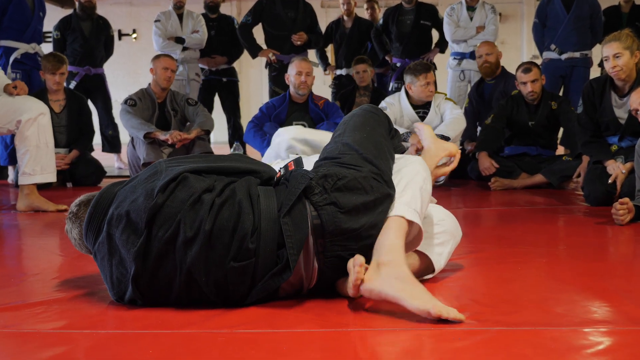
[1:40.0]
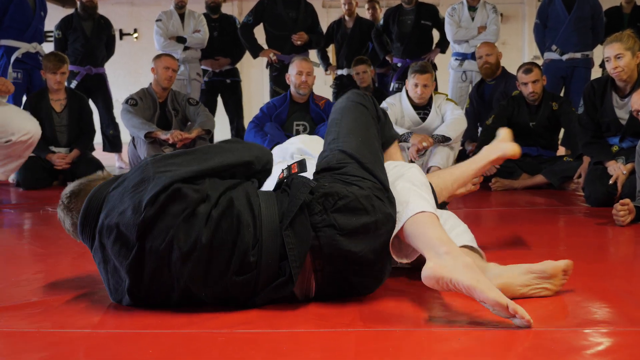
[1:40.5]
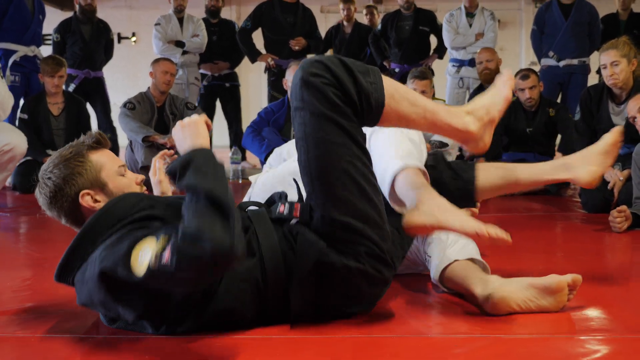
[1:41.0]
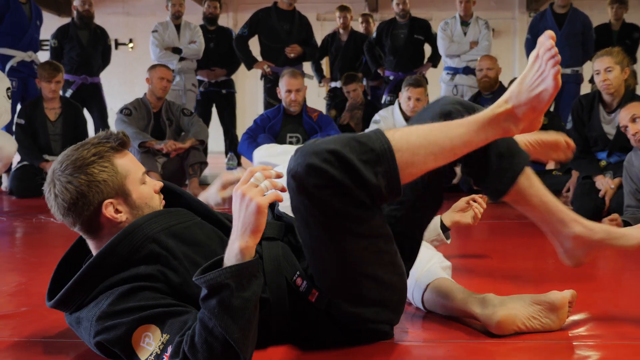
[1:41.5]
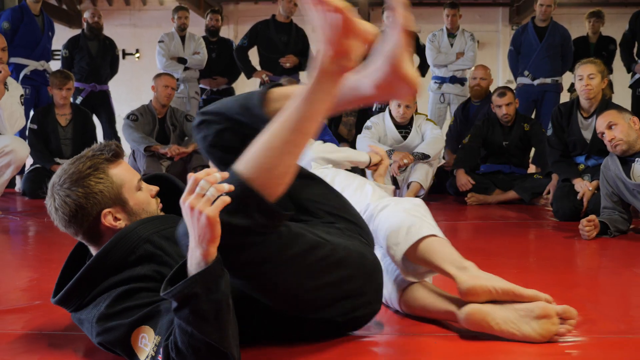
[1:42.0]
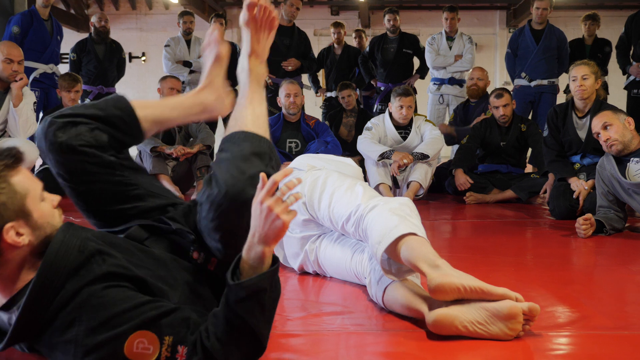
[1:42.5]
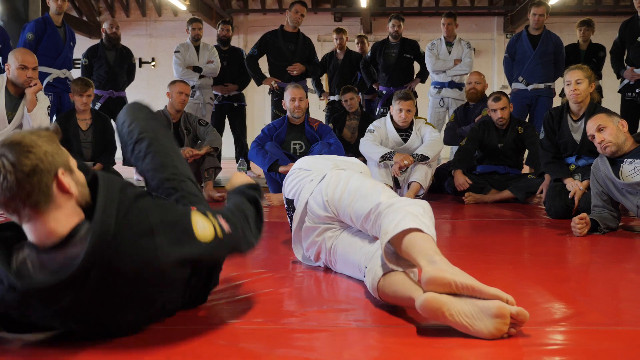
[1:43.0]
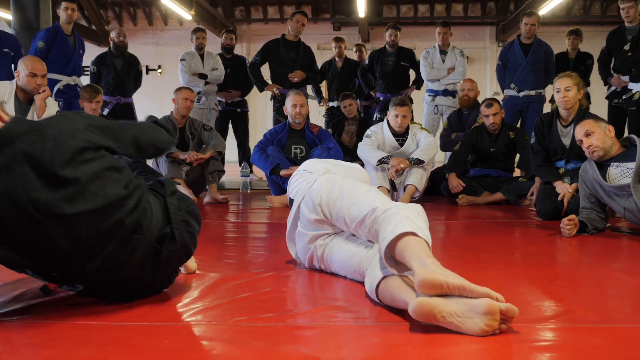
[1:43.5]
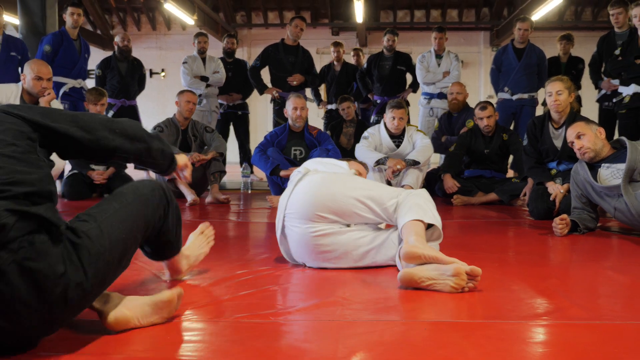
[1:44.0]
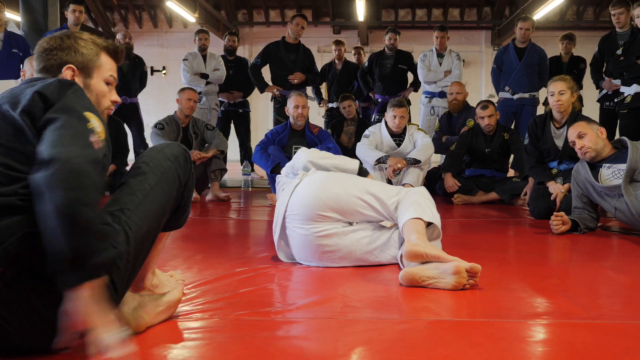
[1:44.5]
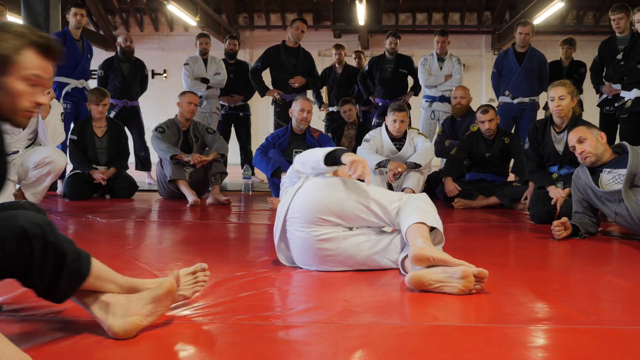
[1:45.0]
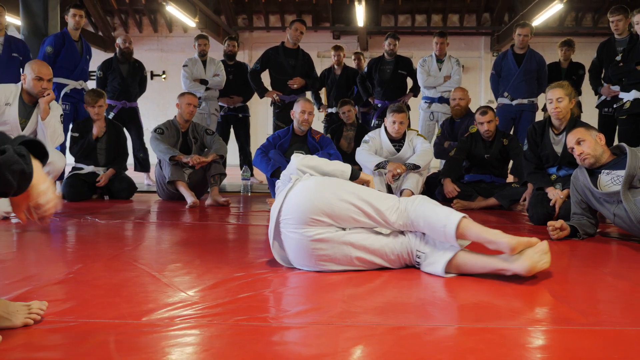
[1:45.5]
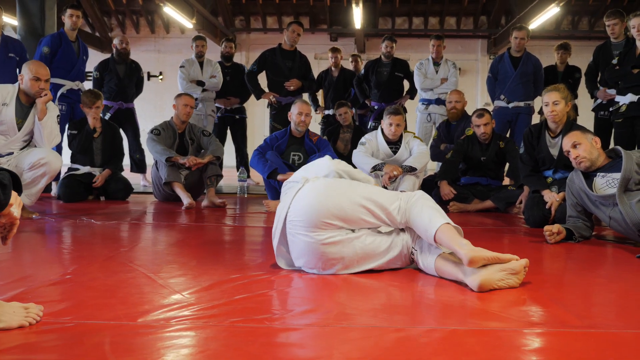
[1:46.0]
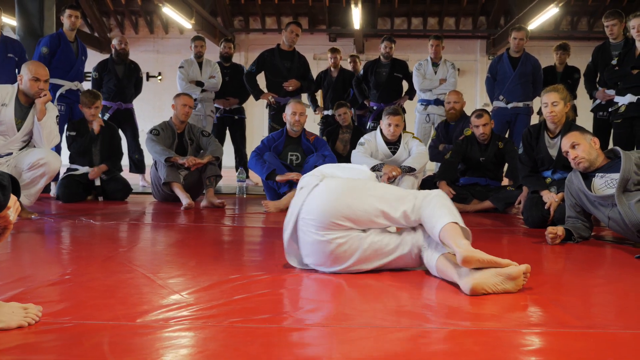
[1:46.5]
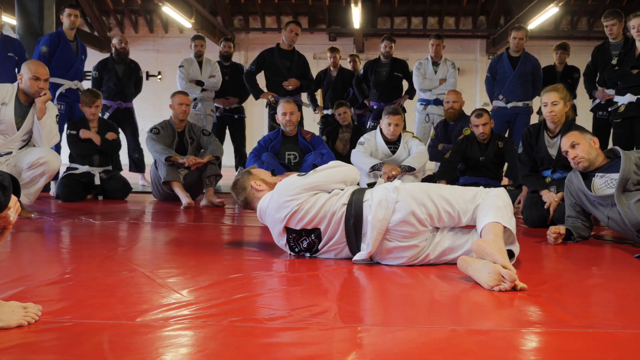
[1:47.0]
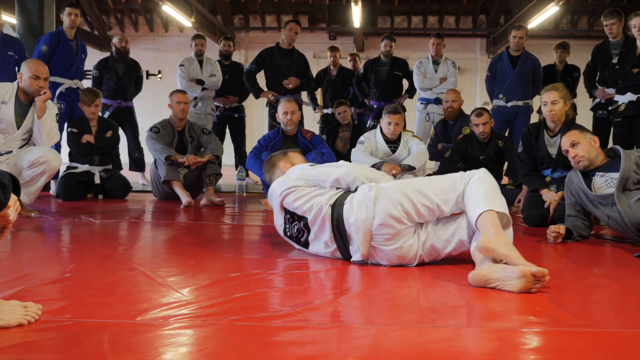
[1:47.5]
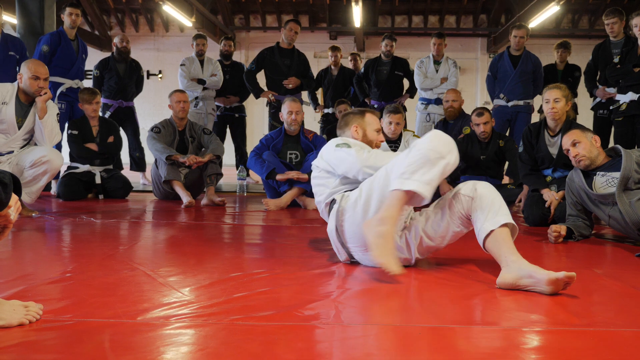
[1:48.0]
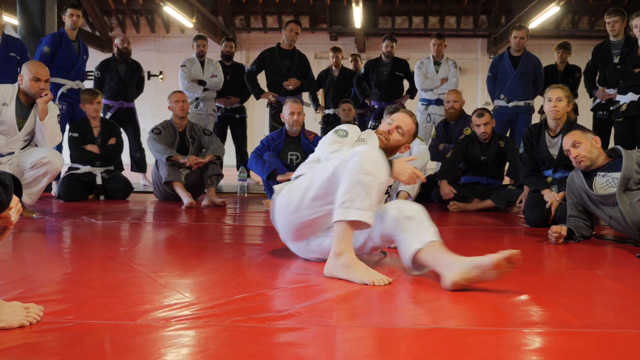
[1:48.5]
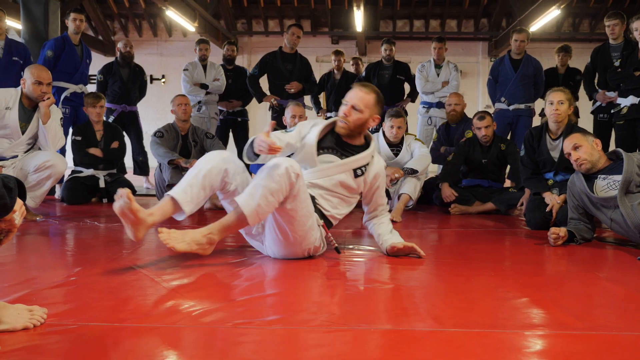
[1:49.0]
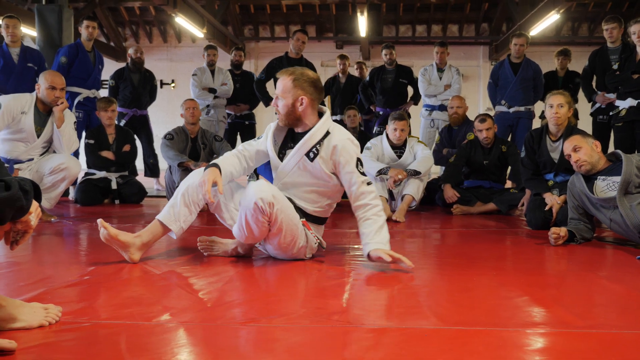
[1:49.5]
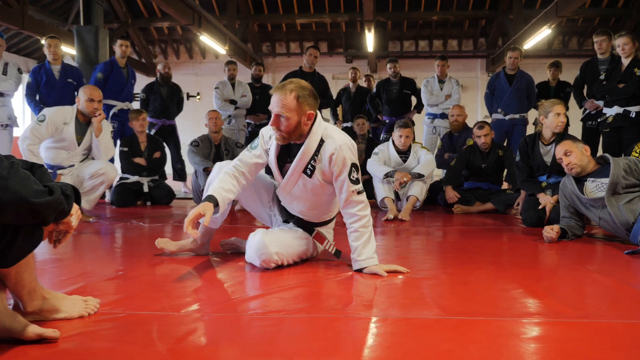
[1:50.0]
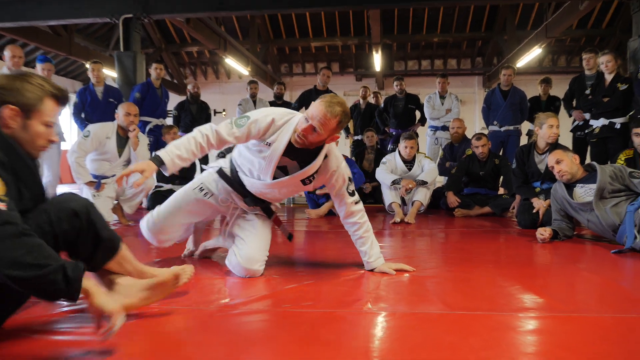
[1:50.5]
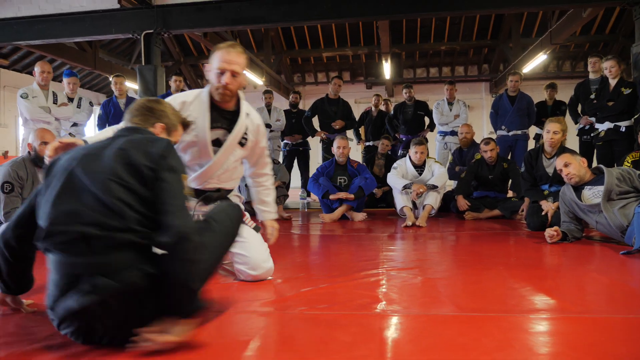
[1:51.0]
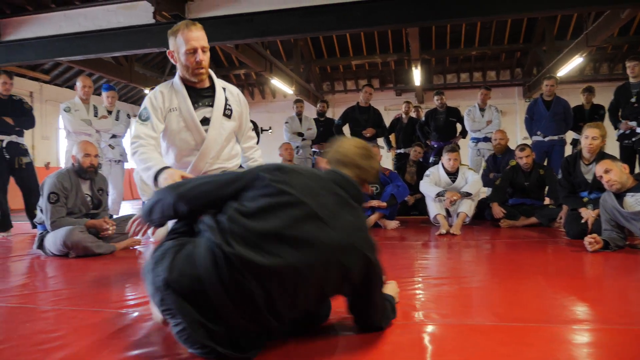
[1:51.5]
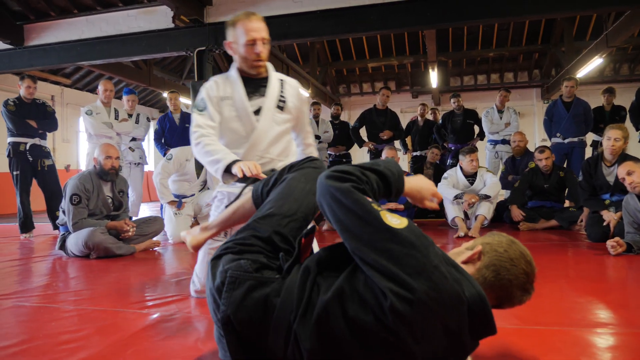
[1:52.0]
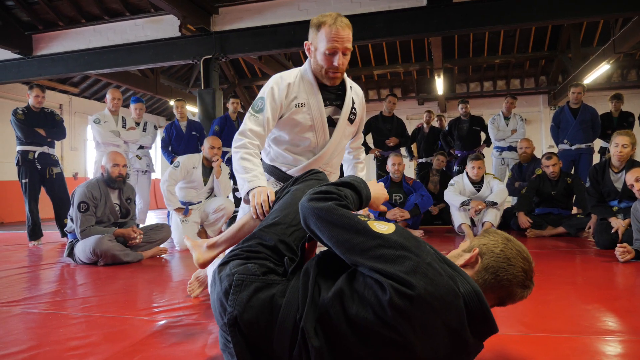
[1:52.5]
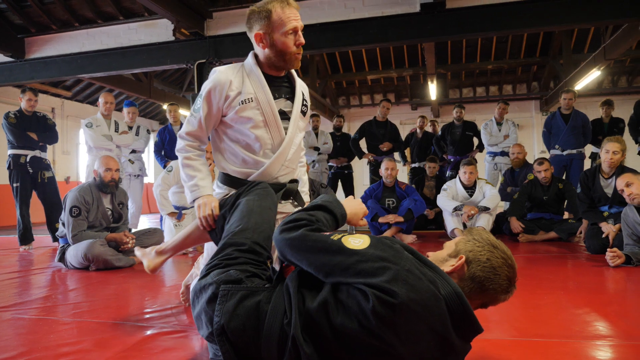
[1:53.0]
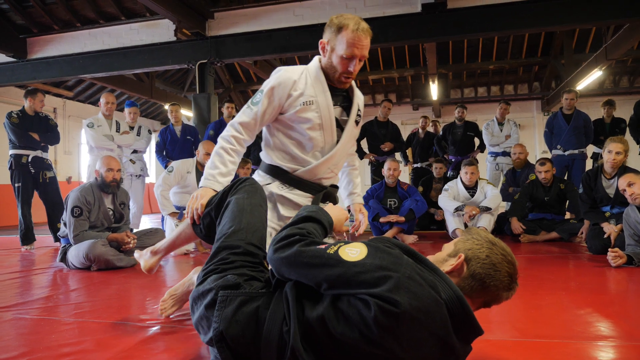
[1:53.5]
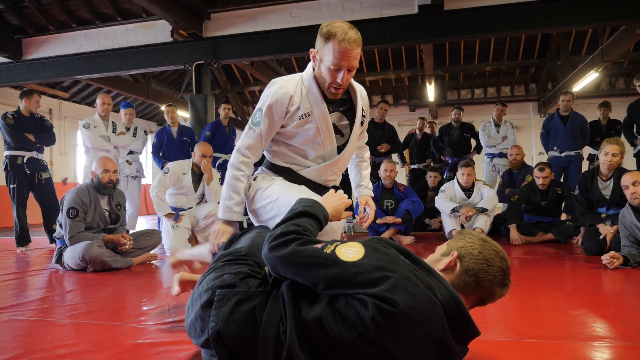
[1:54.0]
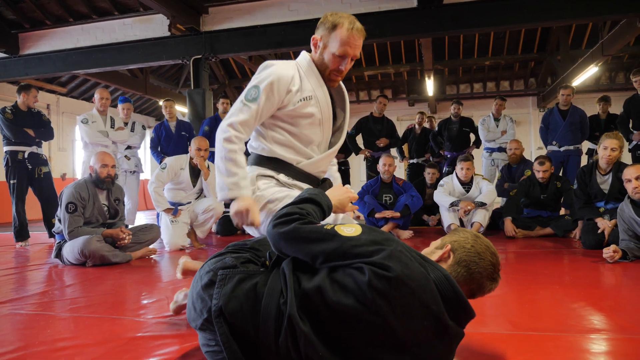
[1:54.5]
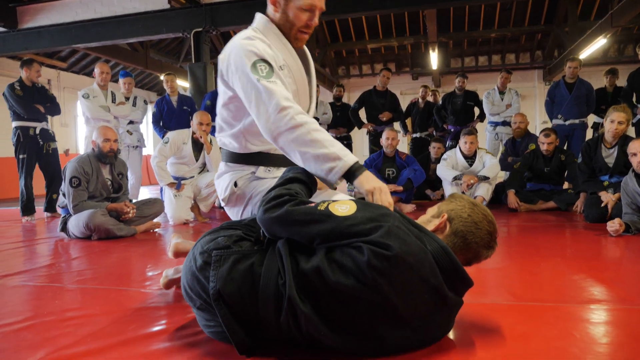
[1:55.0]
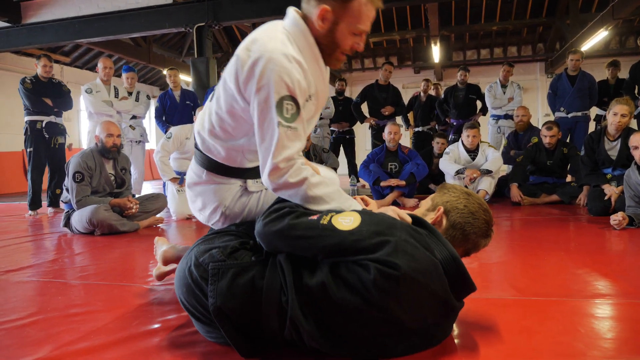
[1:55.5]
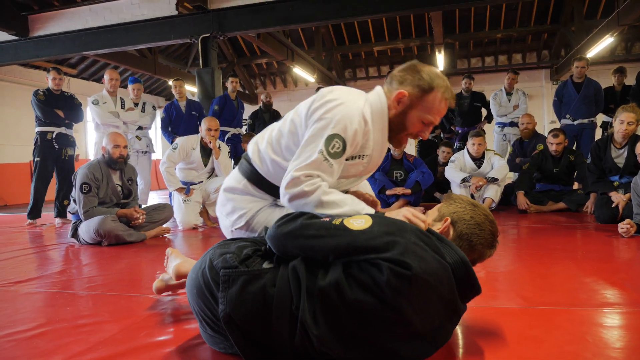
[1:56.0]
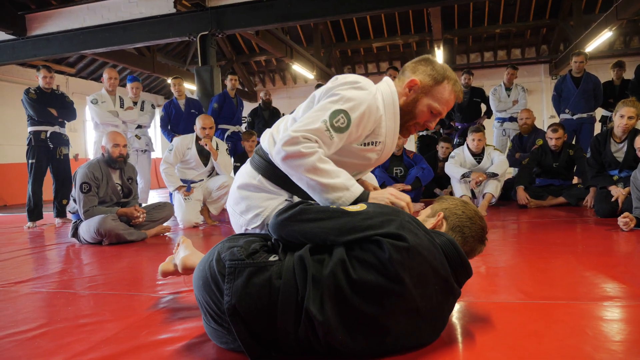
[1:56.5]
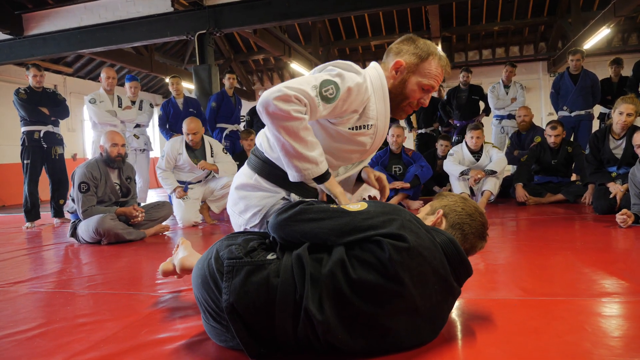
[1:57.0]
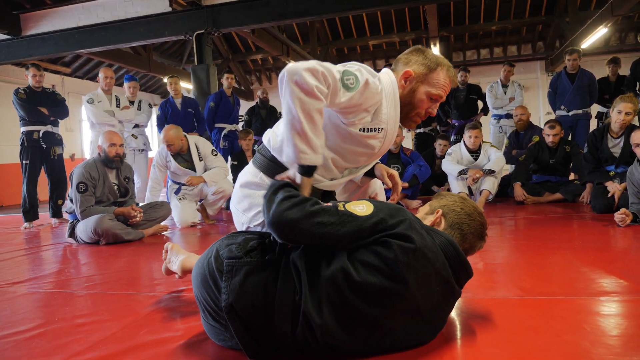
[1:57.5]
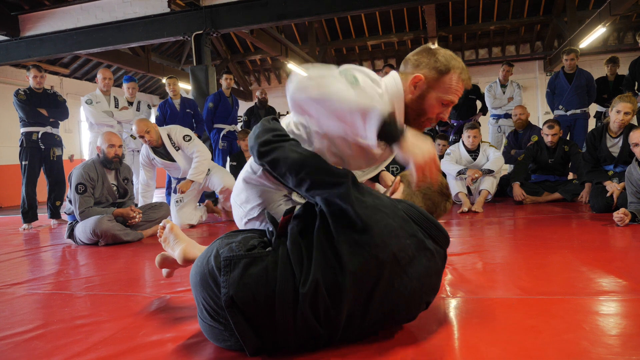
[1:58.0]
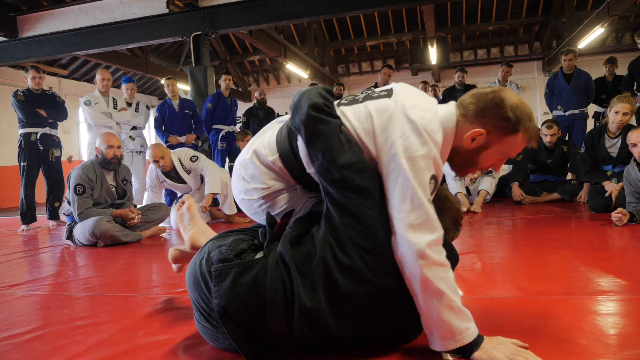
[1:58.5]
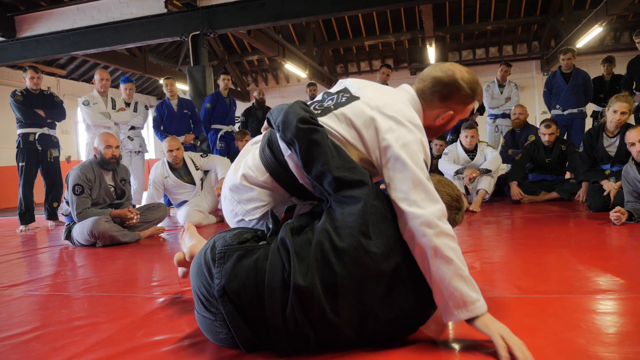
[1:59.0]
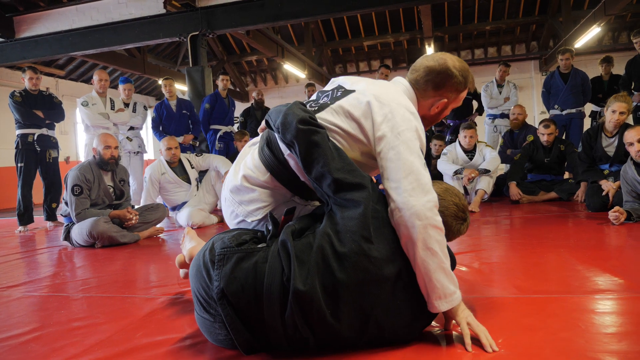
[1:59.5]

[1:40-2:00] The hold is released and the two men roll. The man on the bottom does a kind of backward side roll, comes up to a cross-legged sit and scoots away, while the instructor in white, on his side, scoots on his side with his back facing the camera. He then also sits up and brings the other man back into the center of the mat, and their legs are locked again. This time the arms of the man in black go around the instructor's waist. The rest of the room is filled with people kind of sitting around watching; they seem very focused, hardly moving, their eyes on the instruction. The room is very bland, just a mat and some ceiling lights, and it looks to be wide.